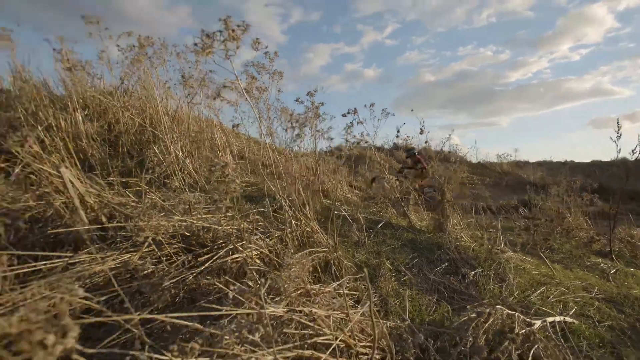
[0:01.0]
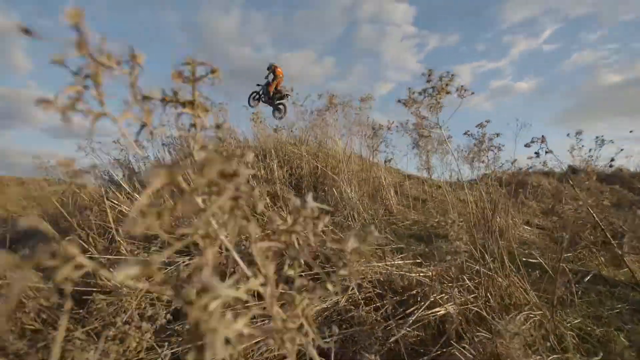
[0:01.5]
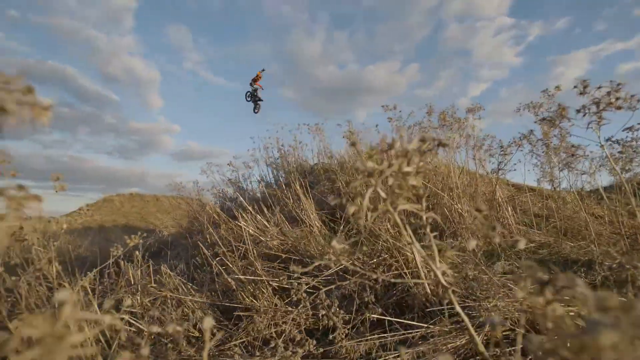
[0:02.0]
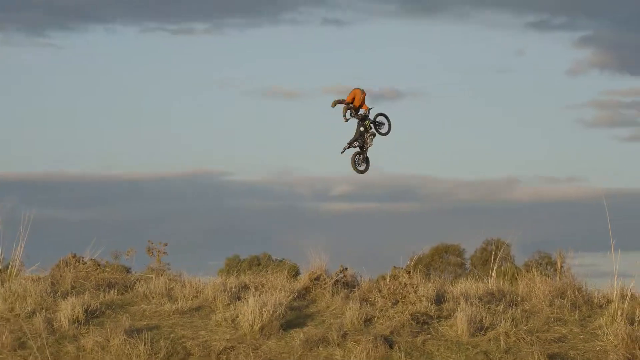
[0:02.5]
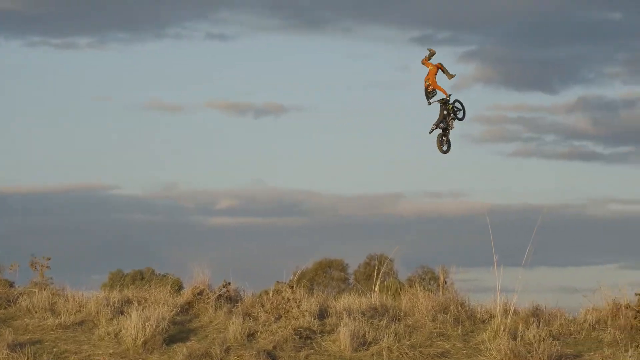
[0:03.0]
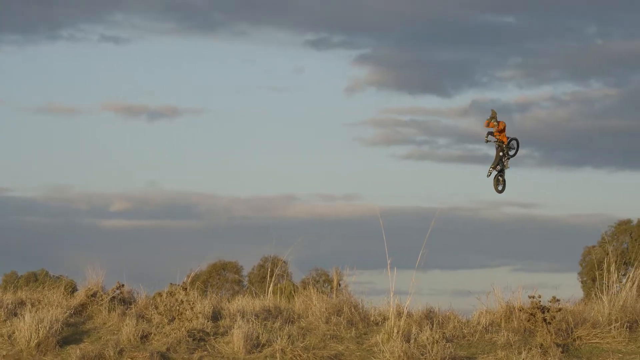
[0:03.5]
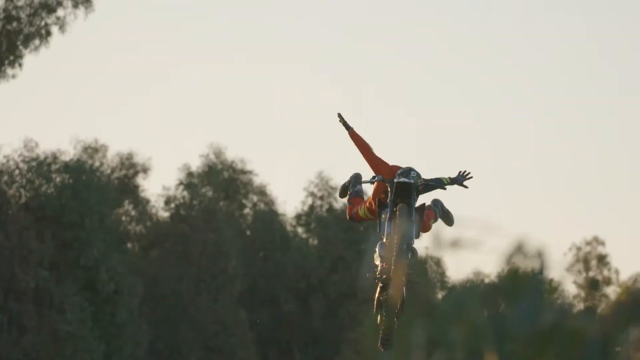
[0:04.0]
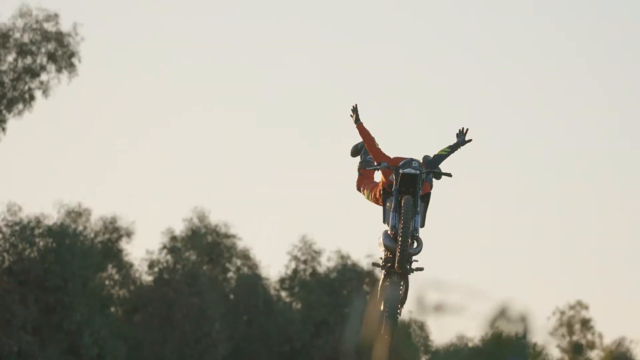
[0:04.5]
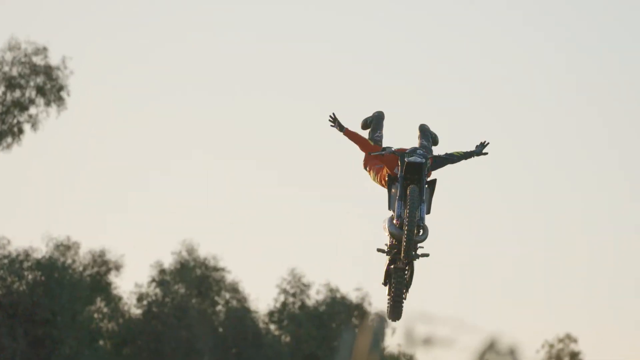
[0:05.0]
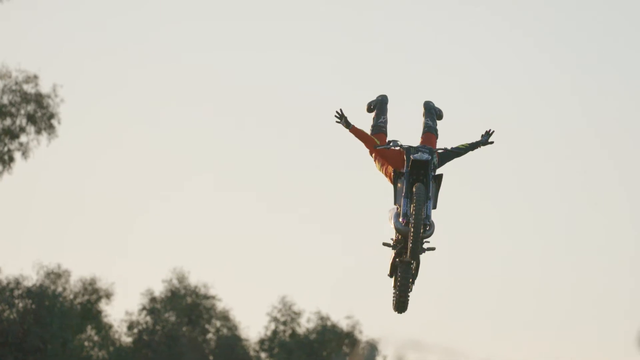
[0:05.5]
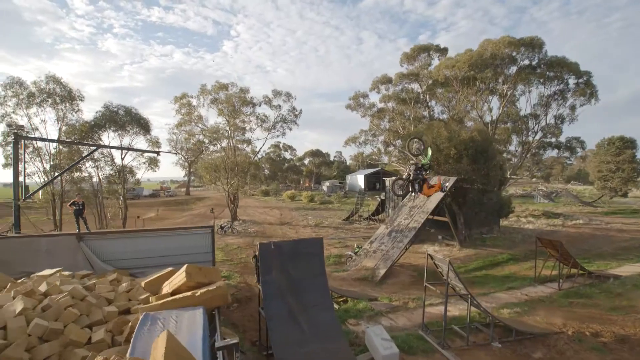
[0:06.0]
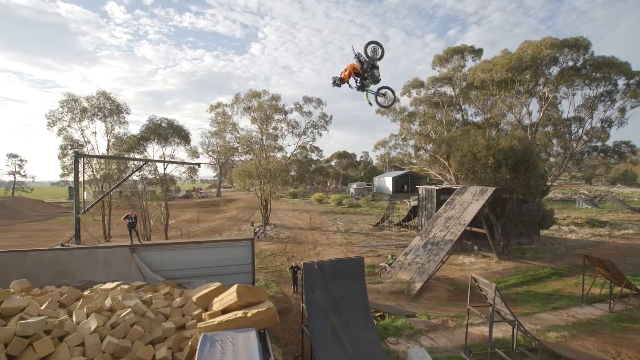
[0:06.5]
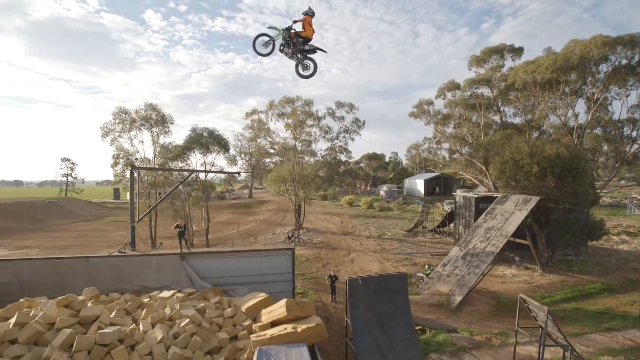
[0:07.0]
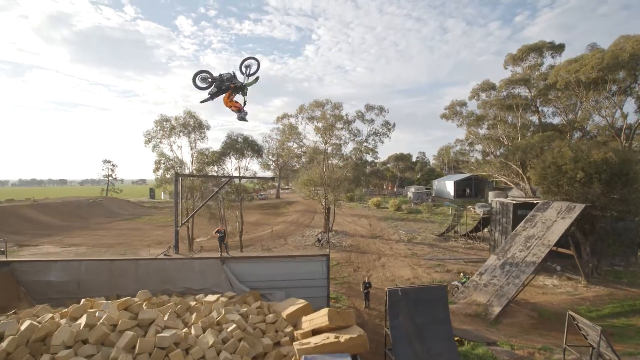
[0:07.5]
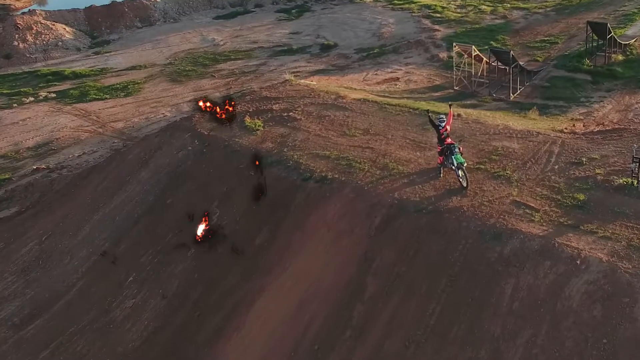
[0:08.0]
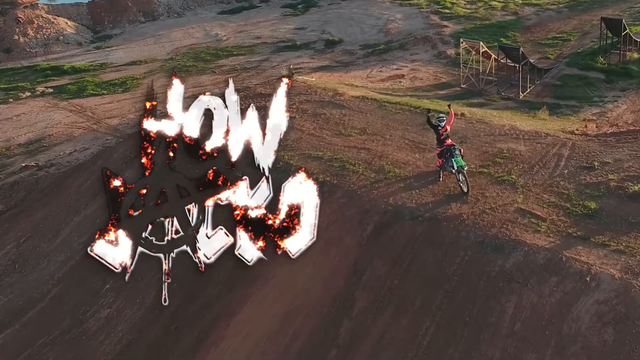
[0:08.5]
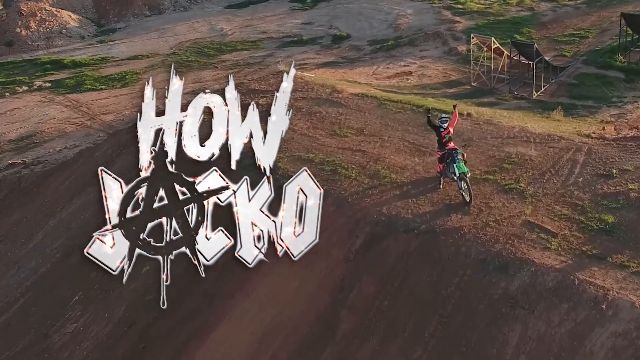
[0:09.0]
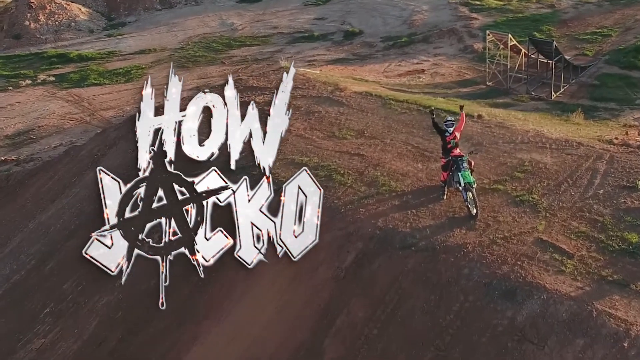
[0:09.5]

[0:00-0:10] The view looks through dead grass in a desert area as a mountain bike flies up into the air behind it, with nothing but desert mountains in view. The rider goes flying, holding on to the handlebars with their legs dangling upside down. Dark clouds are coming in. Another angle from the ground looks up at the biker, who has their legs up and arms stretched out on top of the bike. A cyclist then does a stunt off a ramp; there are a few different ramps in this makeshift, country-farm-like area, and riders go up and spin around in the air. The scene moves to a dirt area with a ramp in the background, where the biker sits on his bike with his arms up. He wears a bright orange outfit and a helmet. On-screen text reads "Howe Jacko" in horror-style lettering; the A looks like it is dripping with blood, has a circle around it, and almost looks like two nails forming the letter. The camera then zooms around to him.